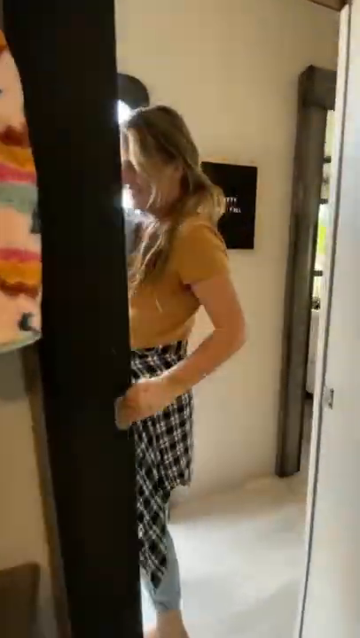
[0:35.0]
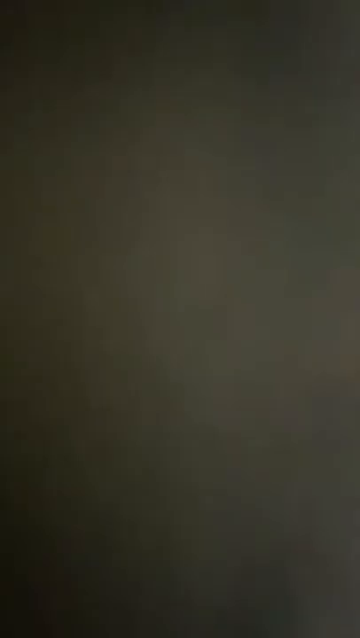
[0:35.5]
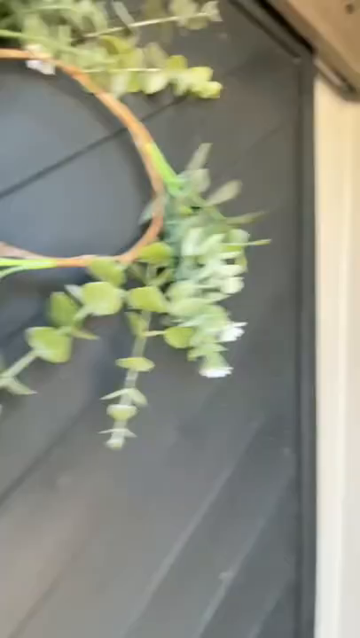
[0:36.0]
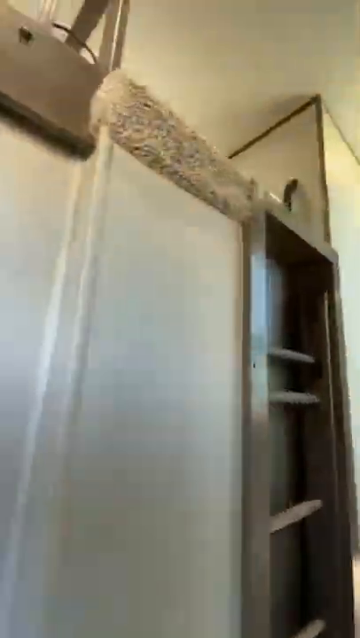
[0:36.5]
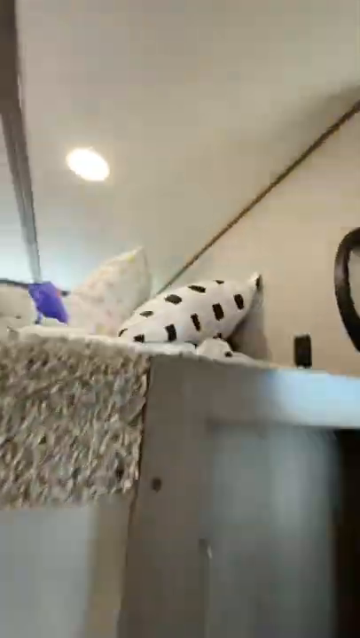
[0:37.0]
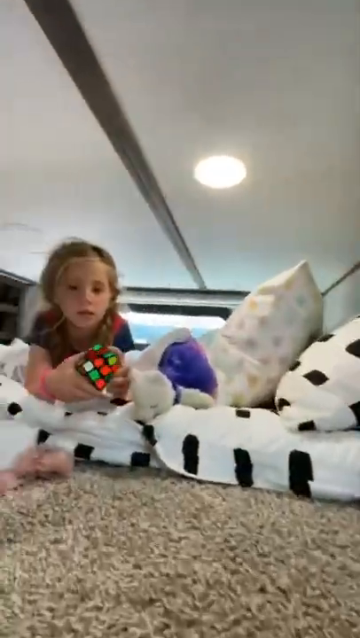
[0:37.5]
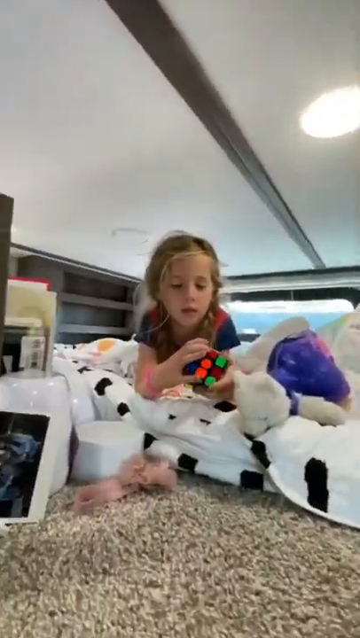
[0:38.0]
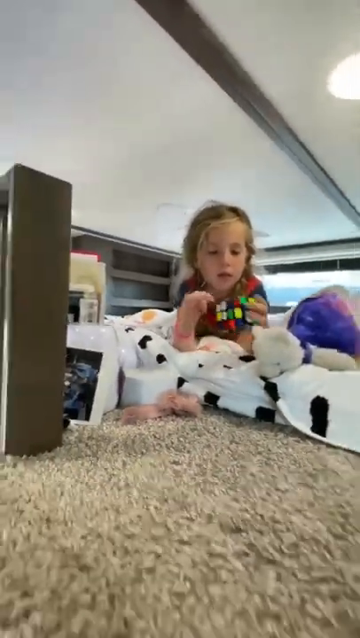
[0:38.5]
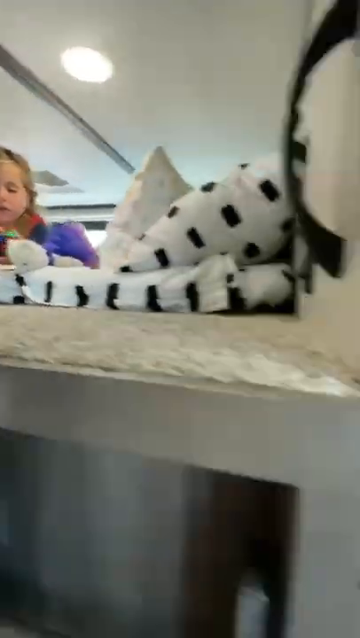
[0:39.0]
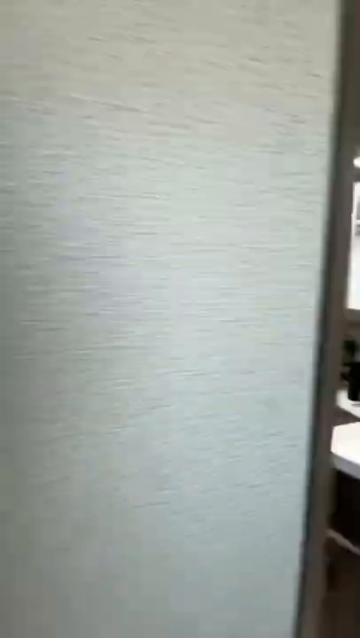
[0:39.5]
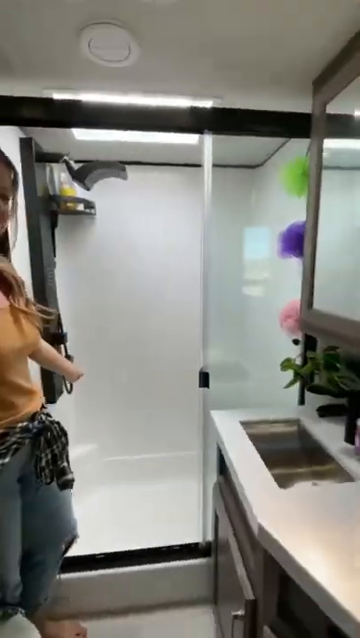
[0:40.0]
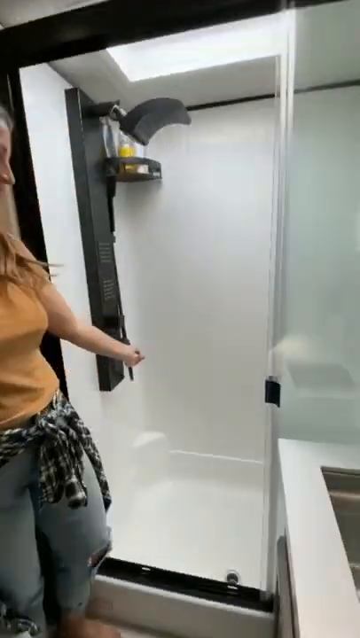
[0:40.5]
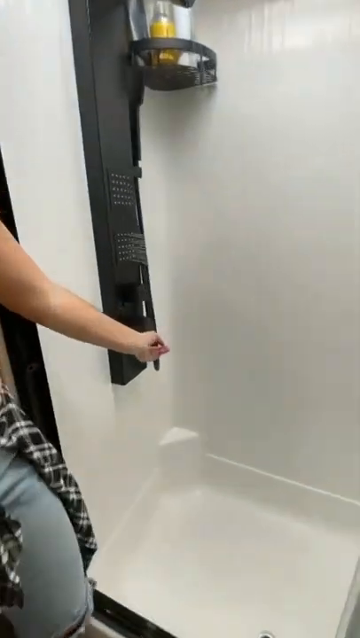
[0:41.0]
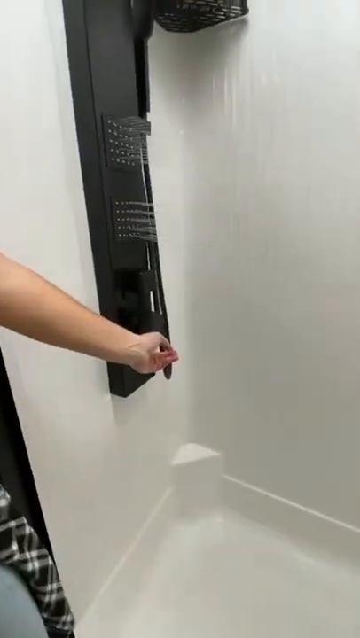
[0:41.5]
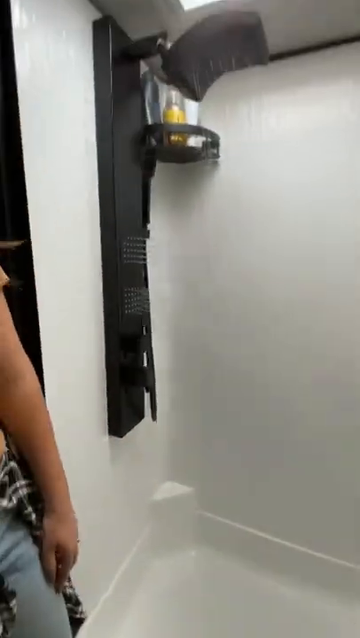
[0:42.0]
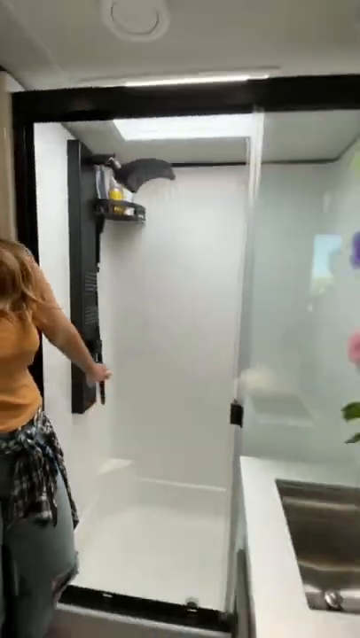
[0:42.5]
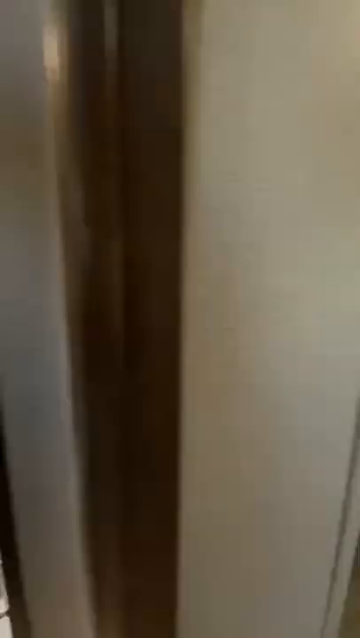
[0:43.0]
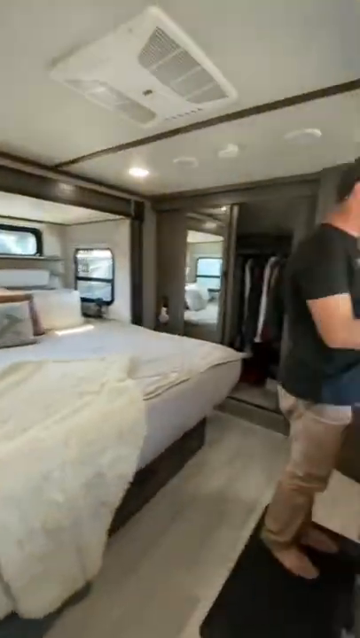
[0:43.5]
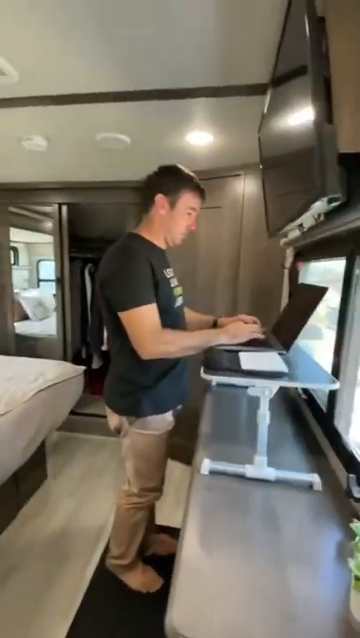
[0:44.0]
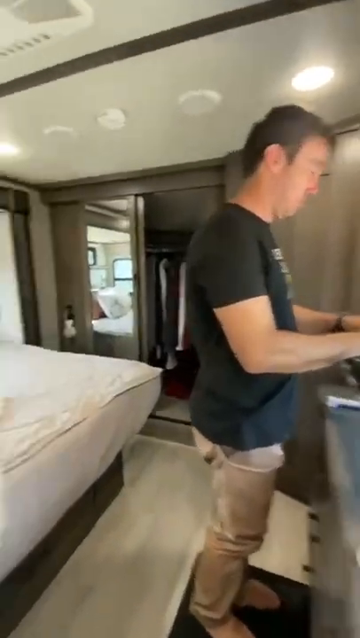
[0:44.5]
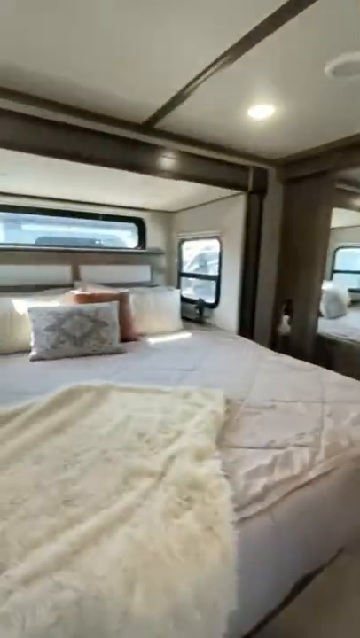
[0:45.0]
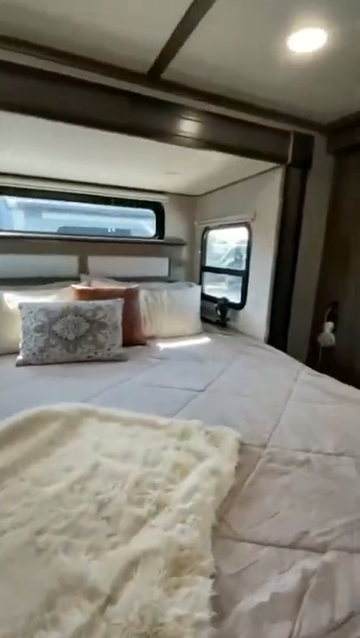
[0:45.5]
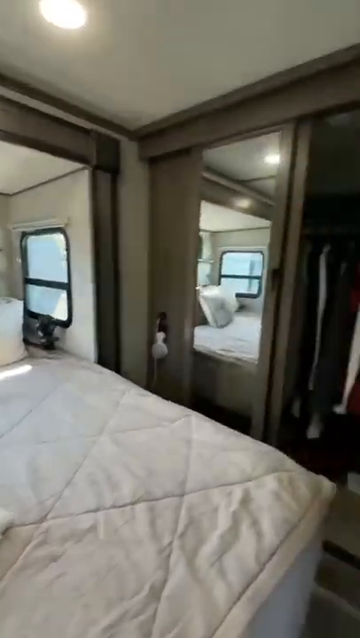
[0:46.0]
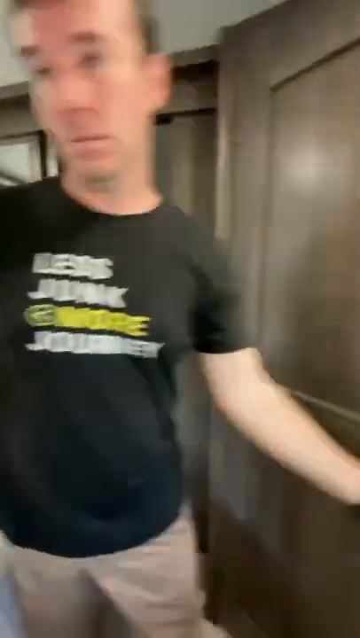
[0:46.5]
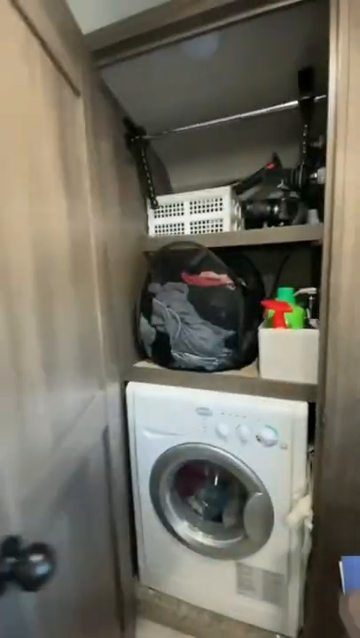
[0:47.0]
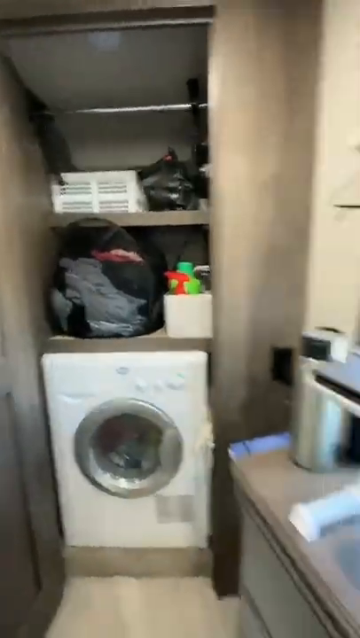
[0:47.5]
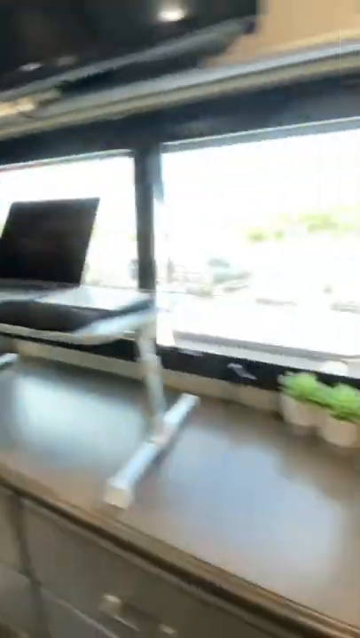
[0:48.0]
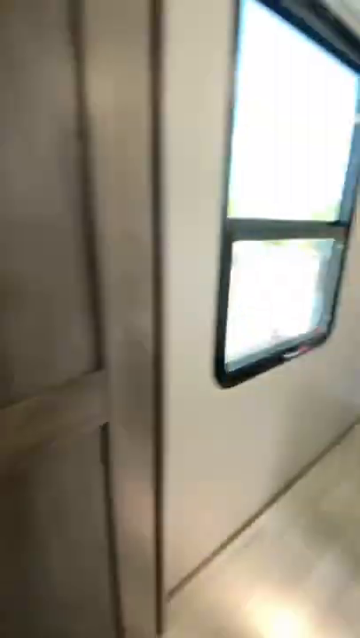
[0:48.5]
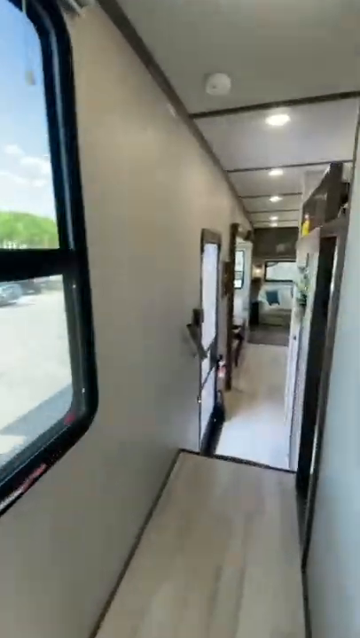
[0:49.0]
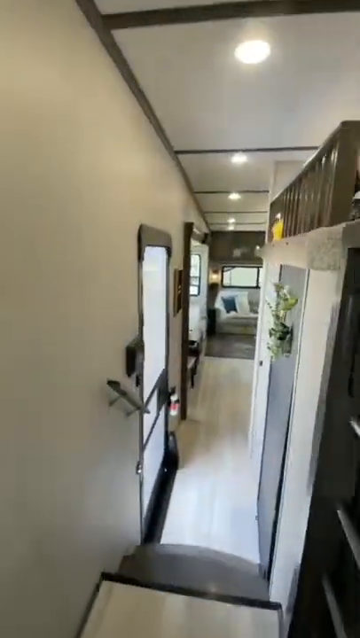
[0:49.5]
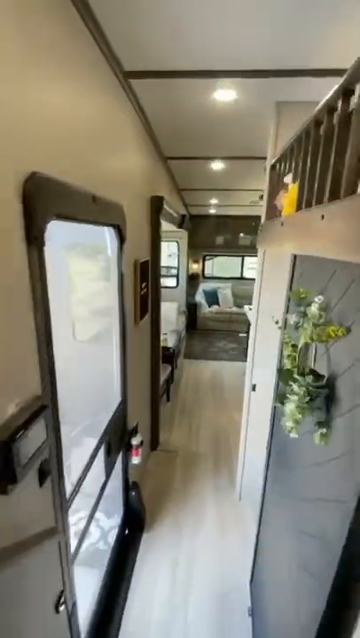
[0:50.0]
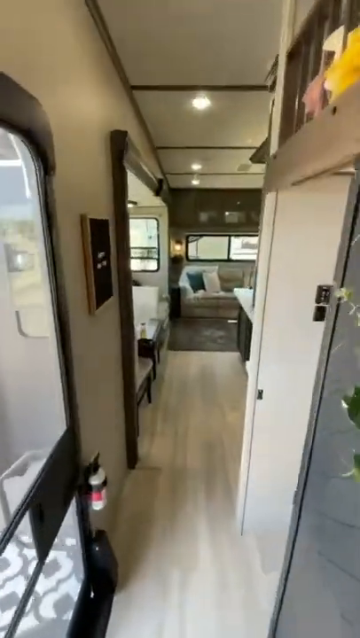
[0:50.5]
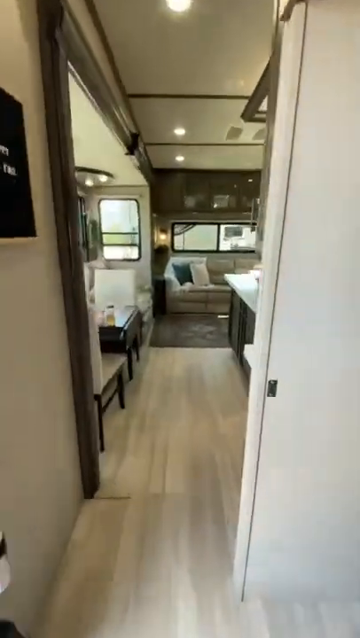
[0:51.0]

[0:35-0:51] The girl appears inside in a quick flash and disappears behind the wall. The woman shows the shower and the shower door, with a hanging rack holding items. There is a laundry room and a very narrow stairway. A girl plays up on an elevated area, with some white and black pillows where she is sitting. A man is in the bedroom, which has what looks like a big king size bed, typing on a laptop computer set on a shelf or the top of a counter-type space. He wears tan pants and a black shirt with white and yellow words written on the front. There are some mirrors, laundry in a closet, shelves above the laundry, and a door to the outside. Down the stairway appears to be a dining area with sort of a Pergo, fake hardwood-type floor. The ceilings do not look very high.